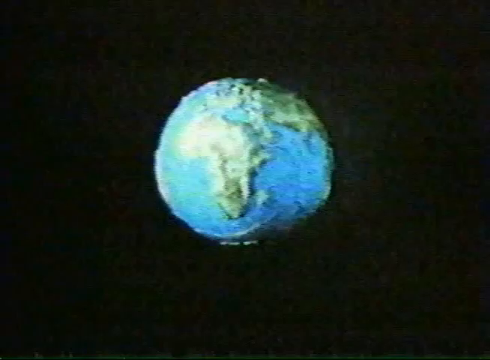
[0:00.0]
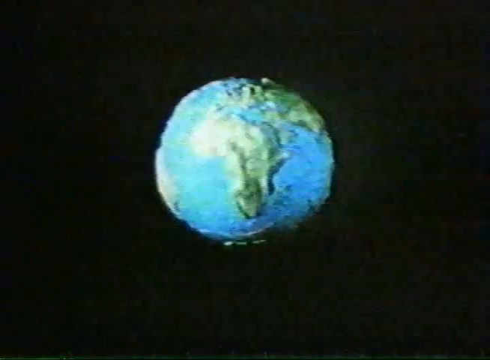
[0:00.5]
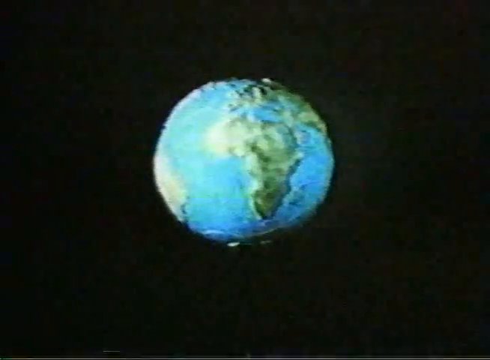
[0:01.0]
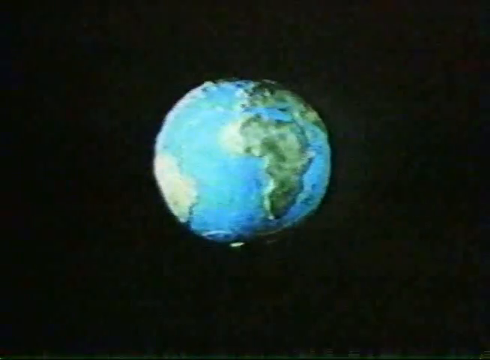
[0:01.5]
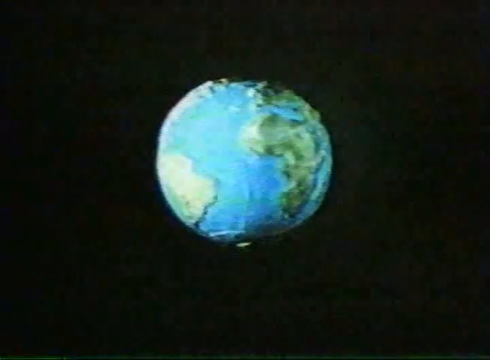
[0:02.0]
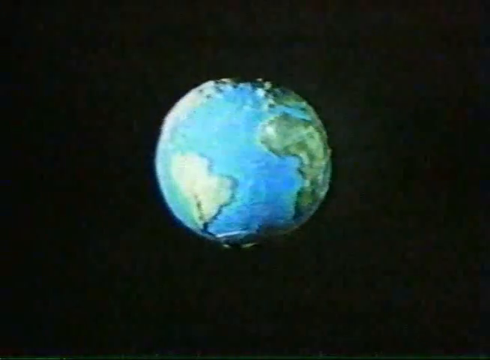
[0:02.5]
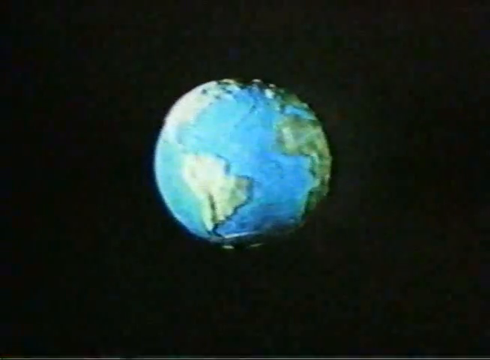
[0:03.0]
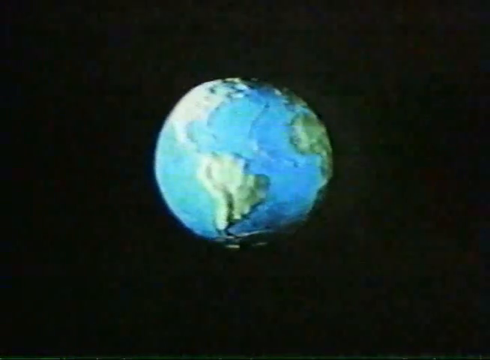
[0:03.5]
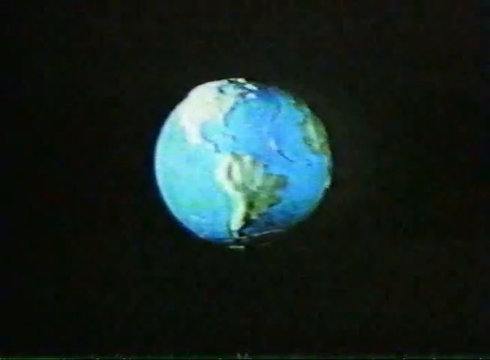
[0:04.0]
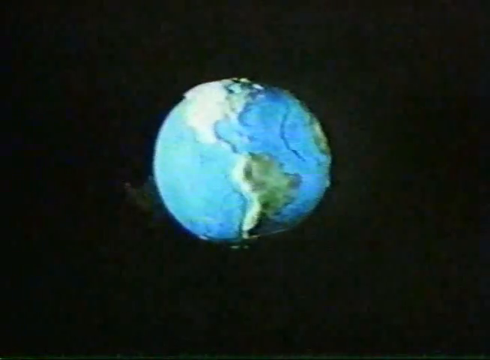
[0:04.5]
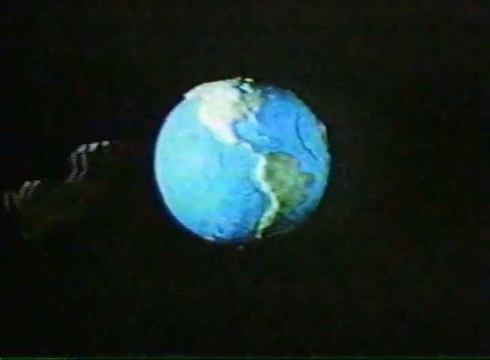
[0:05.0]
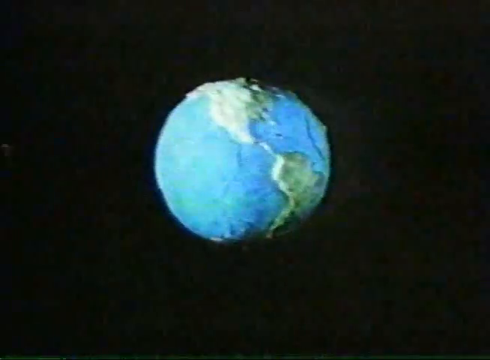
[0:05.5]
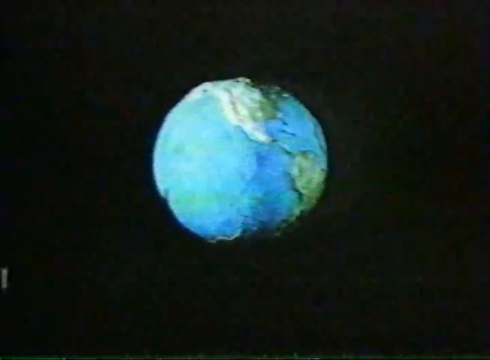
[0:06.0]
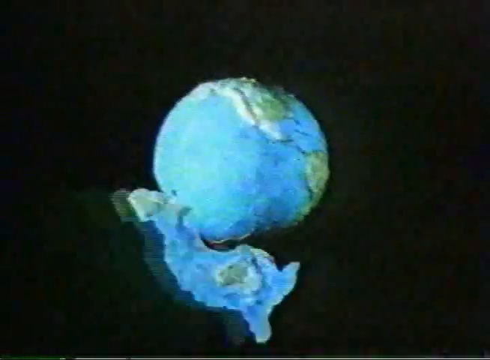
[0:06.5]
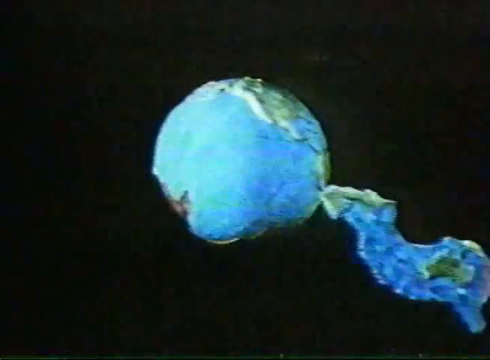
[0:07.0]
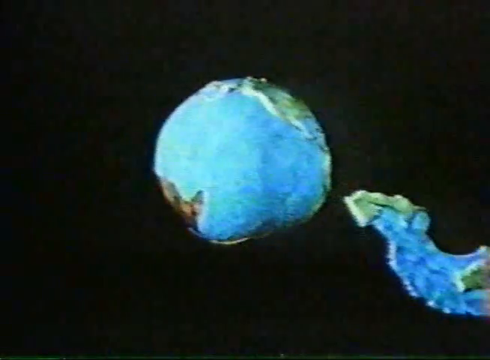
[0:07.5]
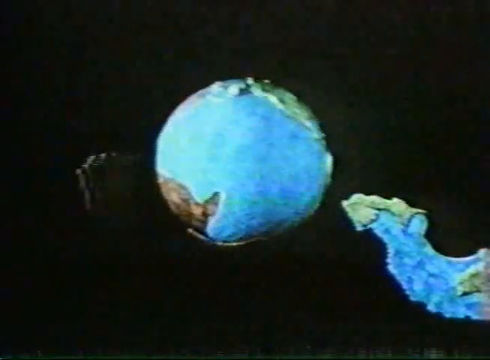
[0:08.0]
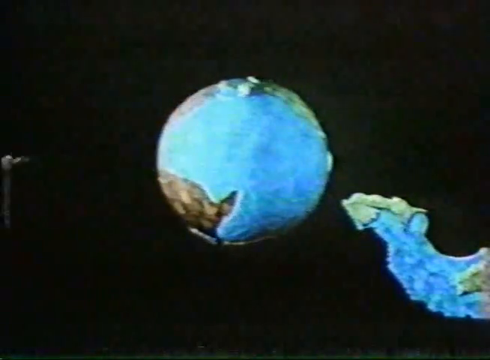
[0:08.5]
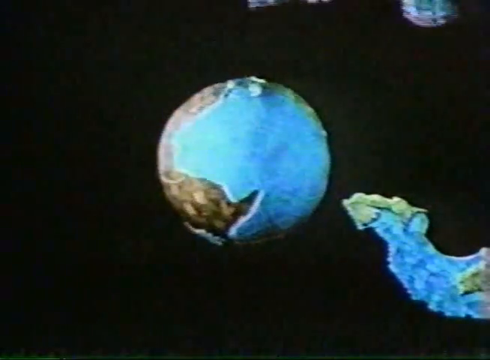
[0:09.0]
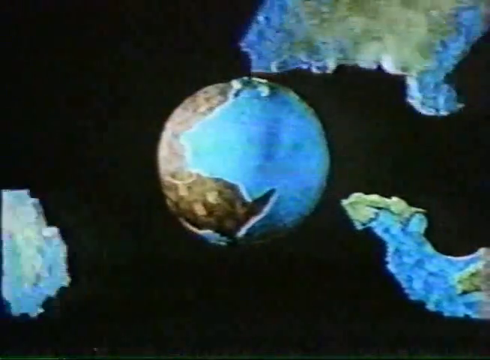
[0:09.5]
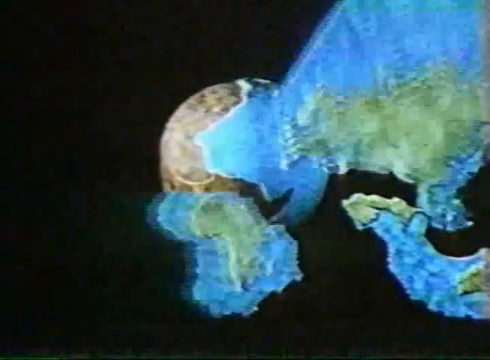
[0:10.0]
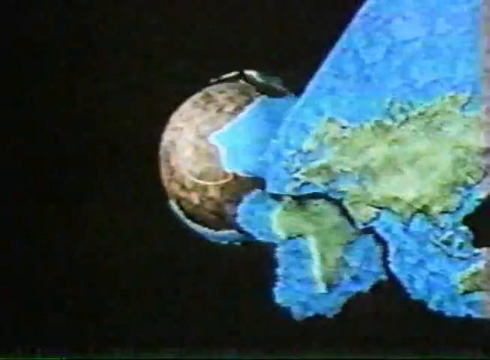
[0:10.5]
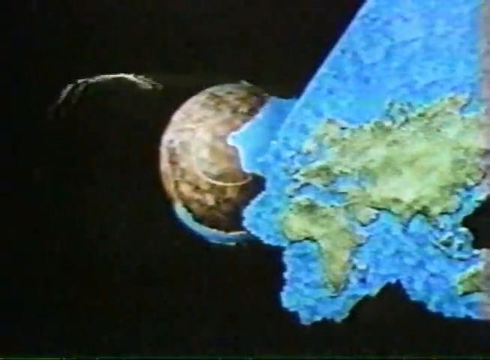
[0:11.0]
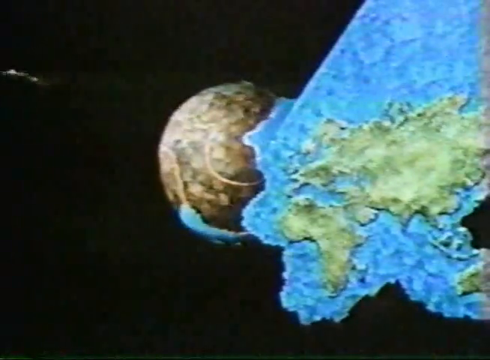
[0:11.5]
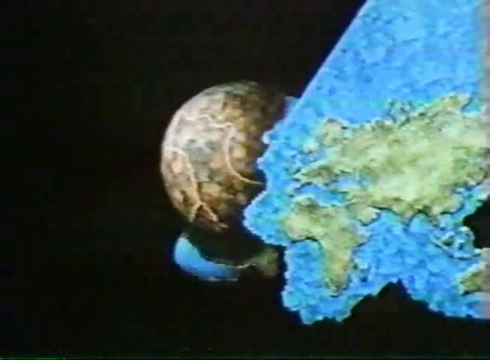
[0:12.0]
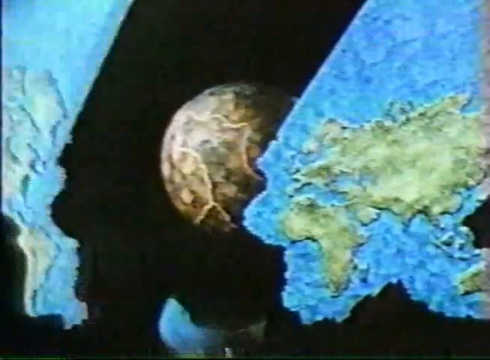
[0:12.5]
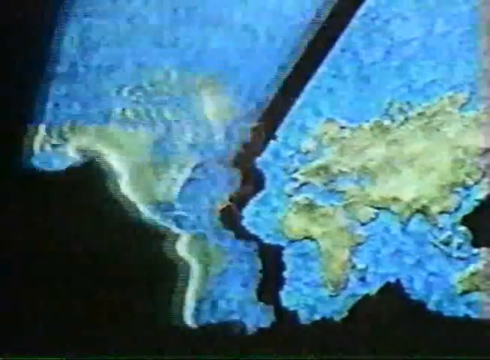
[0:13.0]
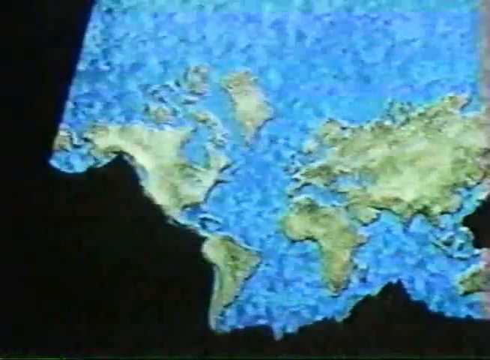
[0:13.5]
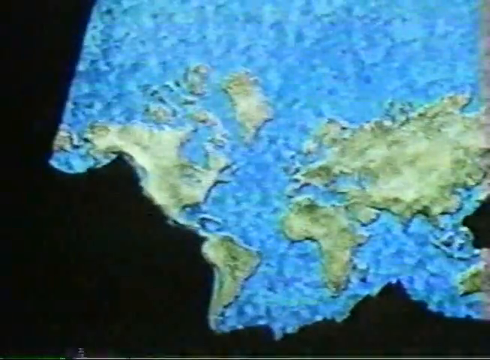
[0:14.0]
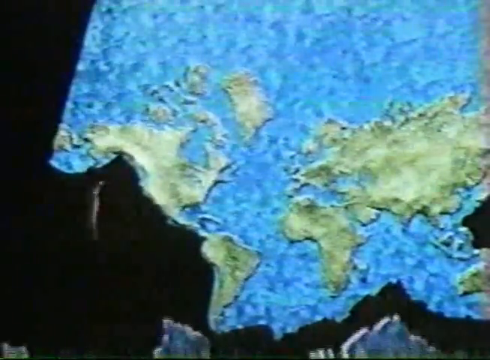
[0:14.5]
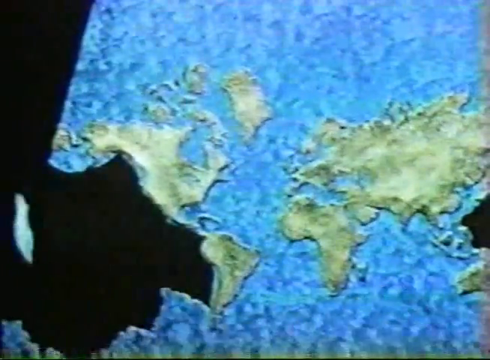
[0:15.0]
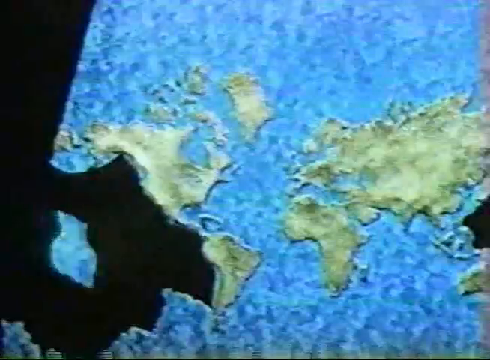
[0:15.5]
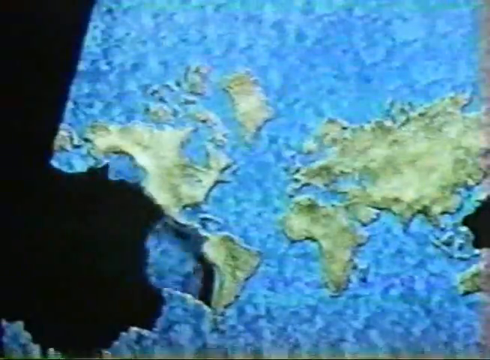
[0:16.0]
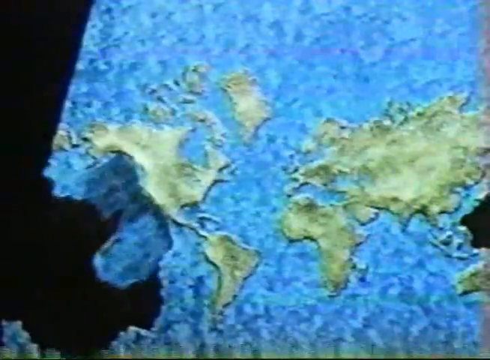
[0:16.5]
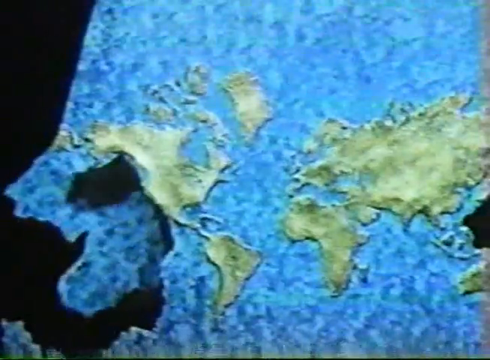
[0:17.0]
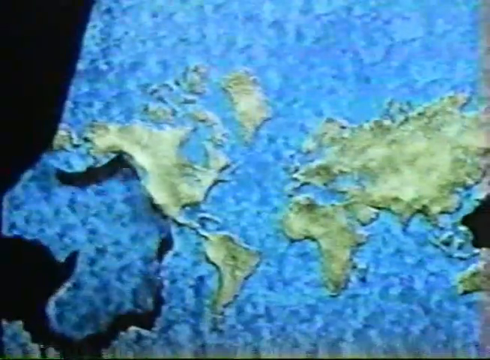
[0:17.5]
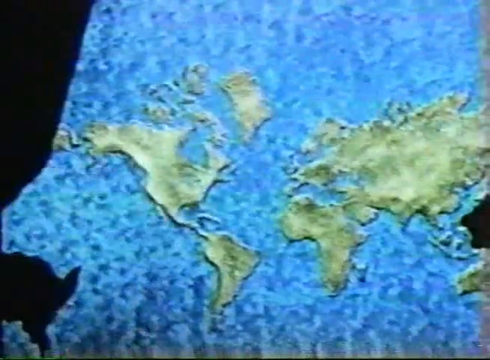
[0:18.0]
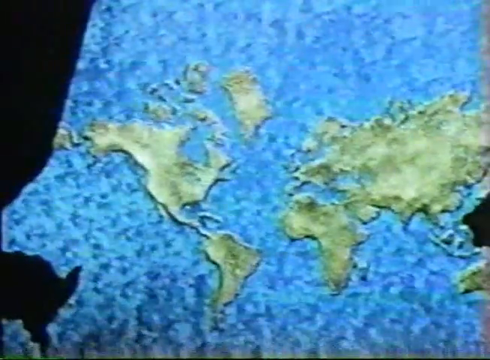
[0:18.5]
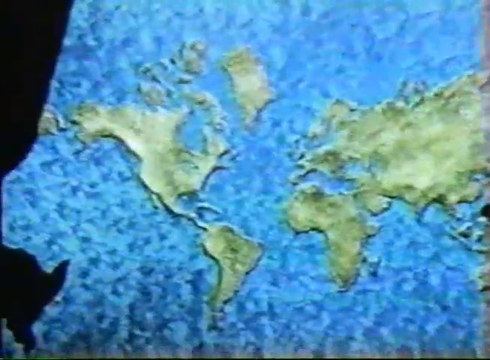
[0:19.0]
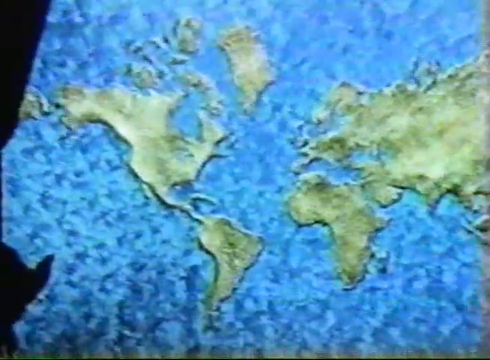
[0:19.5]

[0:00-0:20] Against a very dark, black background, a ball-like globe with textured blue, green and light blue colors moves right around in the centre. It continues to turn slowly, and then some of its parts start peeling off to form something like a map. The parts come out and join together, deep blue parts with green textured parts, each piece fitting perfectly, until they become a visible map with different parts. The map takes over the screen and the black background is no longer visible. The sphere is left with no colors; it looks brown and textured. There is no text. The map fills the screen, putting the globe behind it, and even after peeling, the globe continues to move right around.